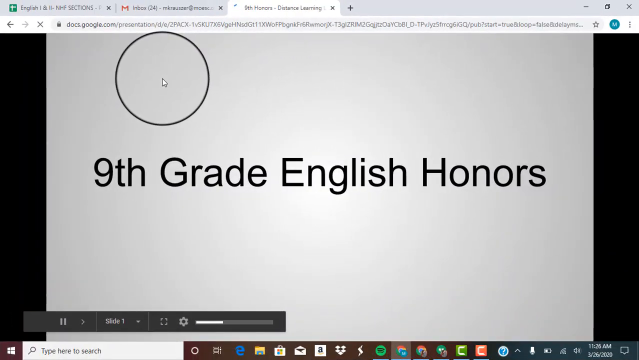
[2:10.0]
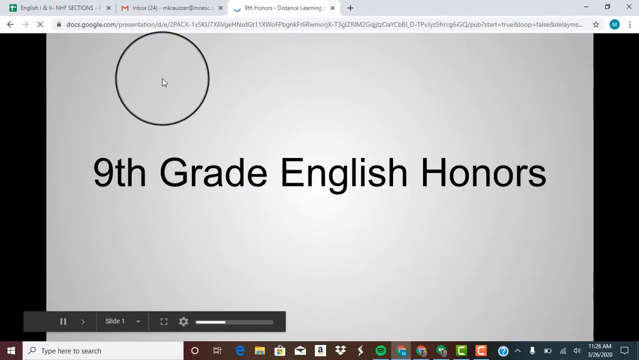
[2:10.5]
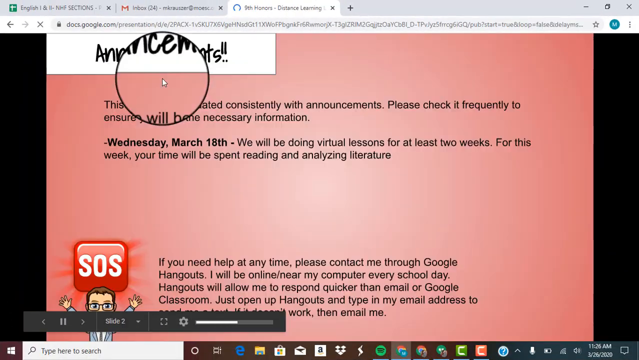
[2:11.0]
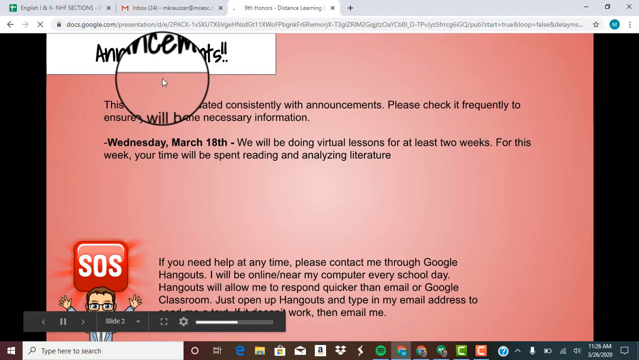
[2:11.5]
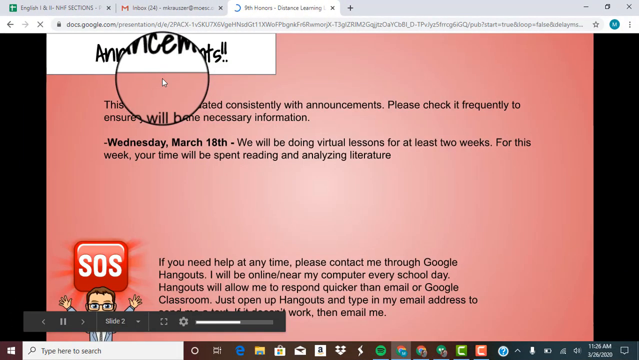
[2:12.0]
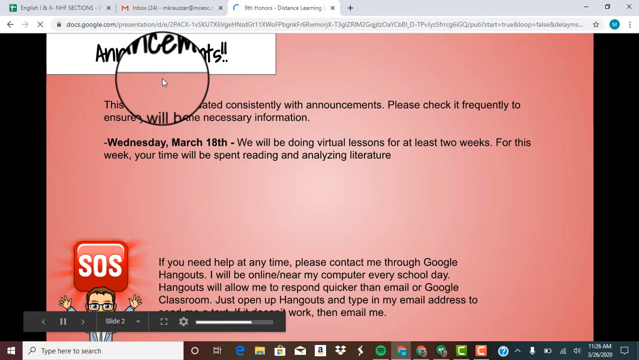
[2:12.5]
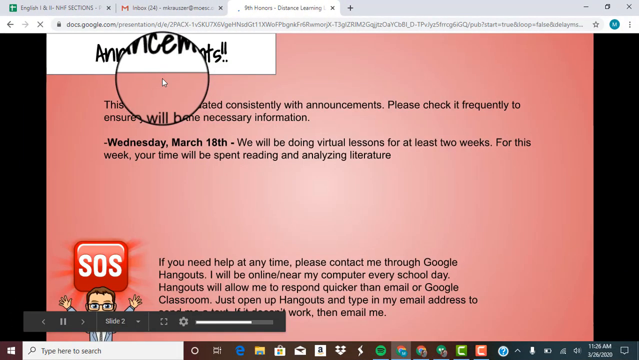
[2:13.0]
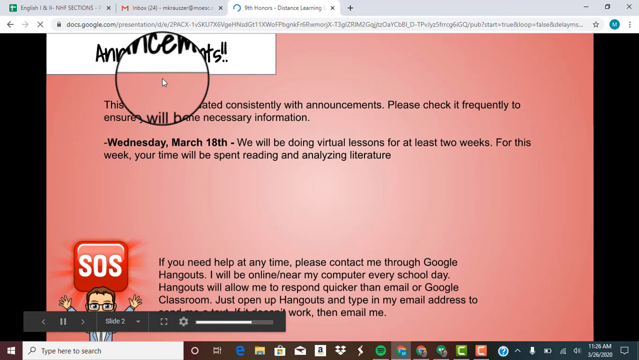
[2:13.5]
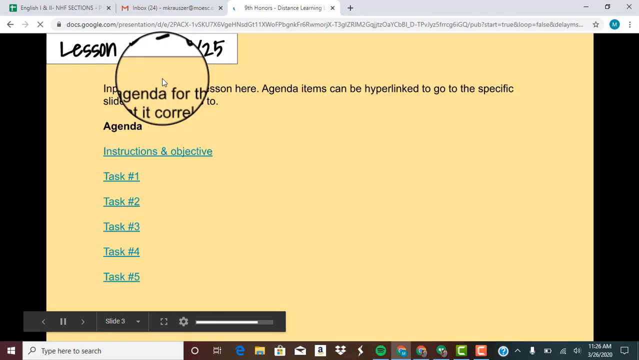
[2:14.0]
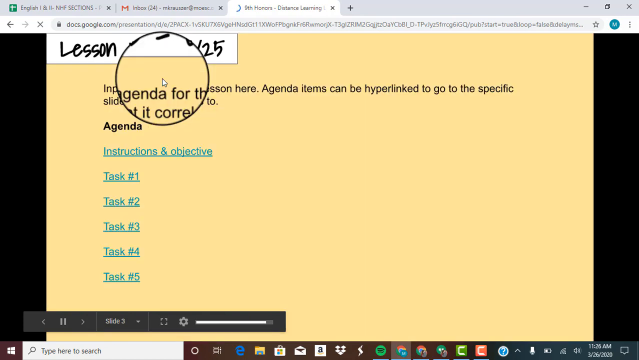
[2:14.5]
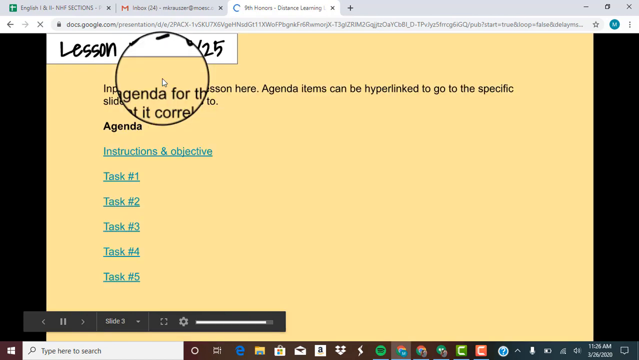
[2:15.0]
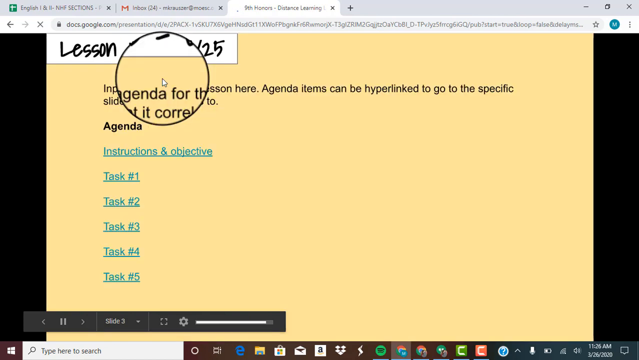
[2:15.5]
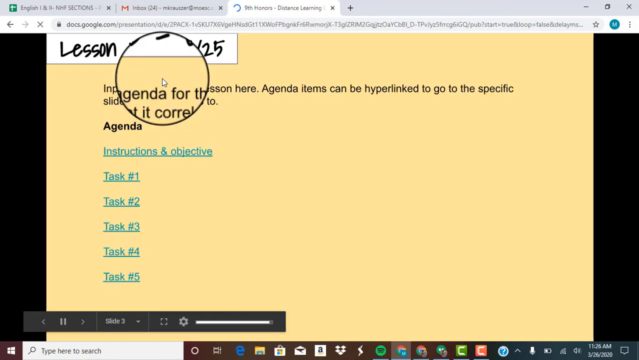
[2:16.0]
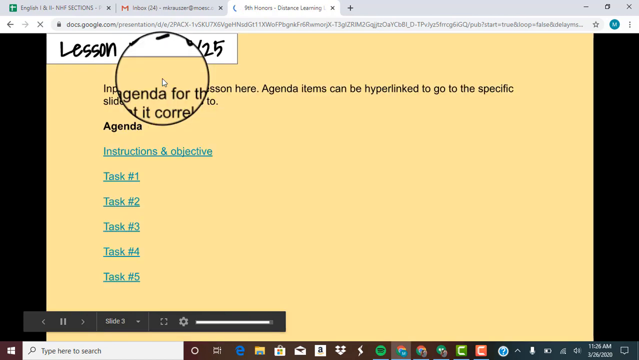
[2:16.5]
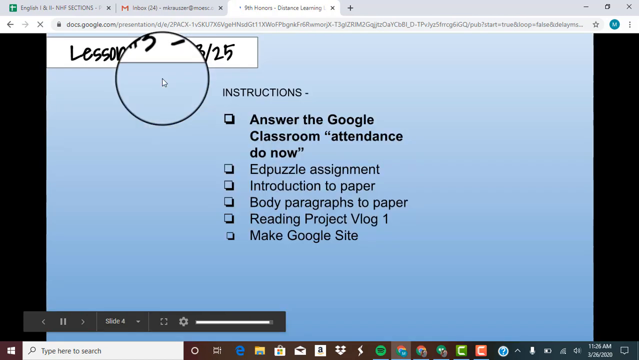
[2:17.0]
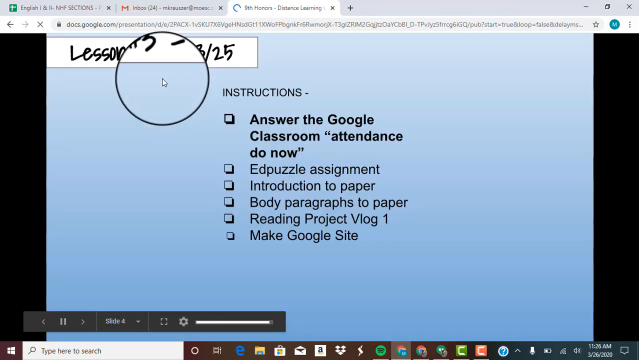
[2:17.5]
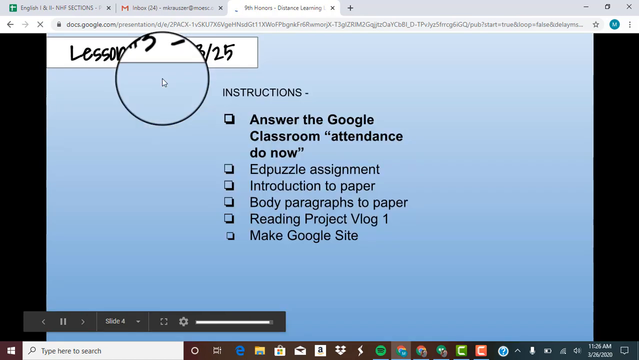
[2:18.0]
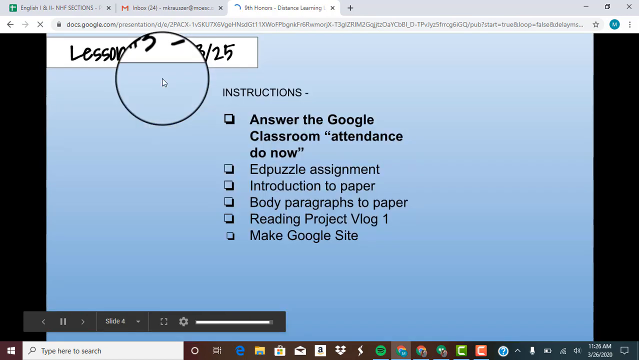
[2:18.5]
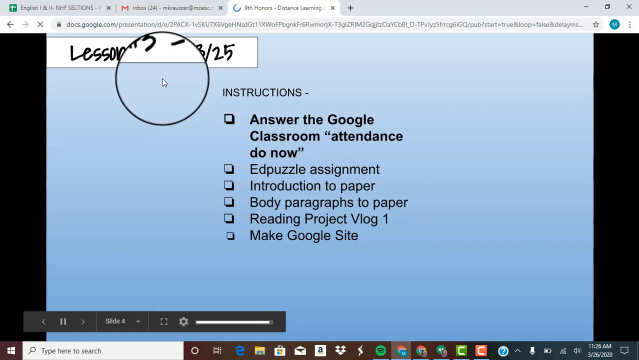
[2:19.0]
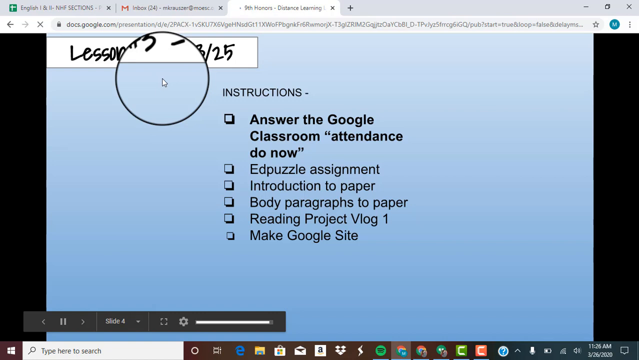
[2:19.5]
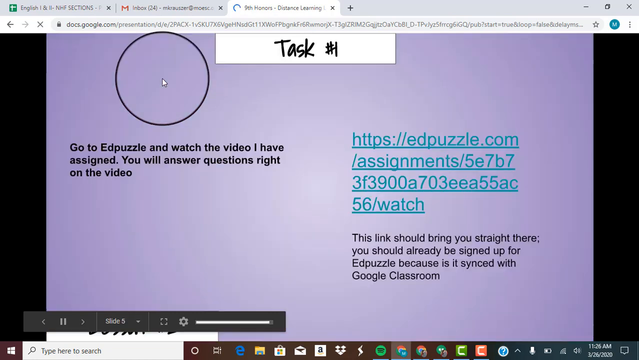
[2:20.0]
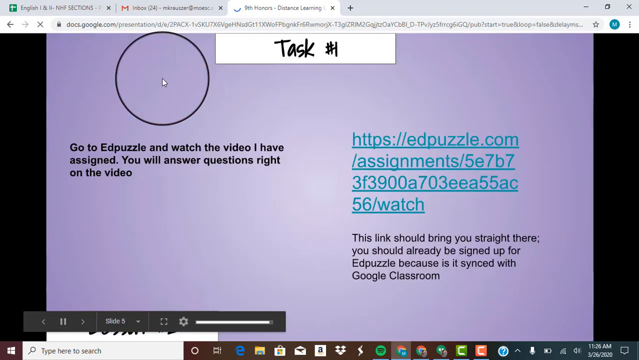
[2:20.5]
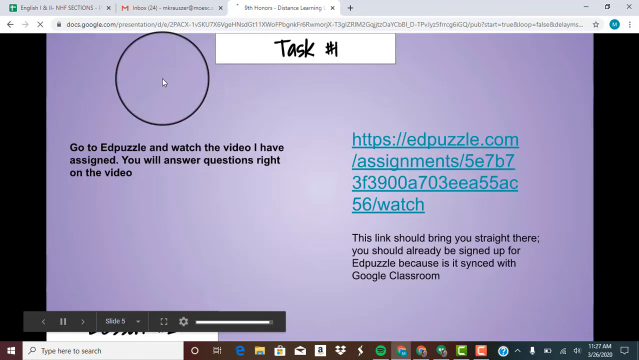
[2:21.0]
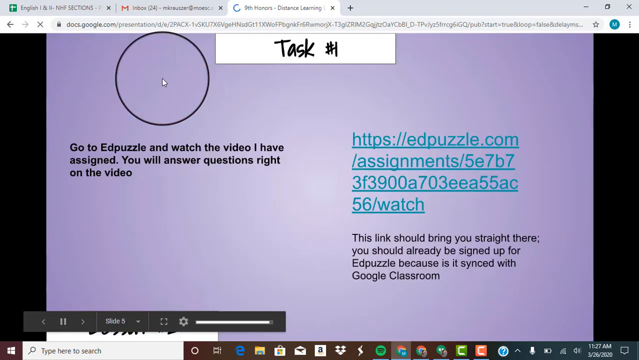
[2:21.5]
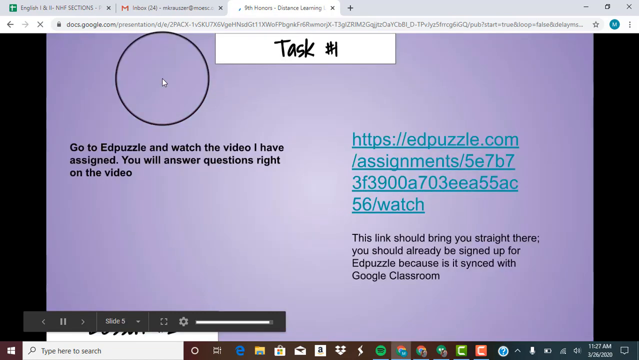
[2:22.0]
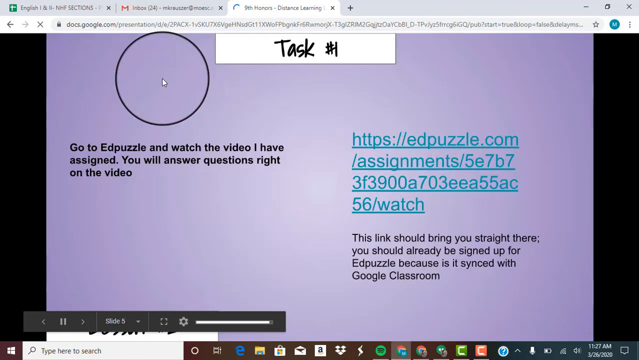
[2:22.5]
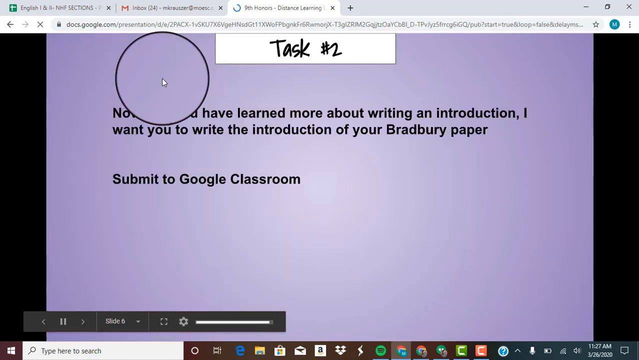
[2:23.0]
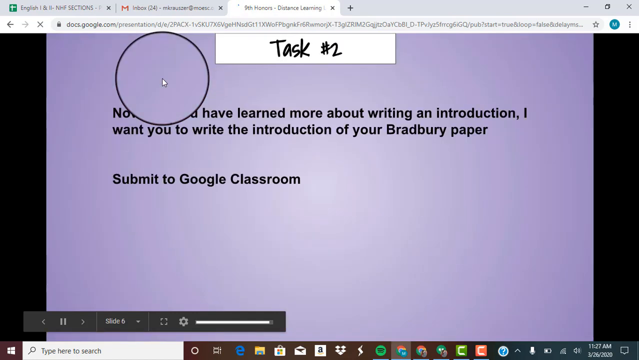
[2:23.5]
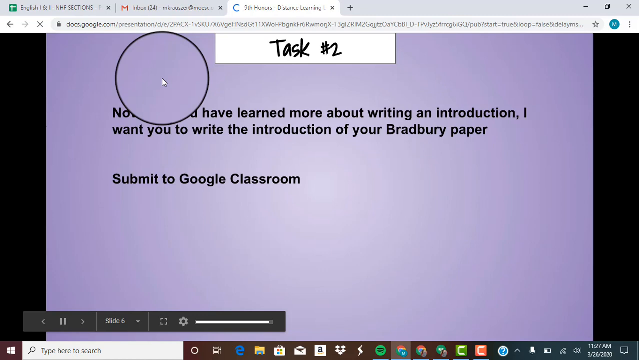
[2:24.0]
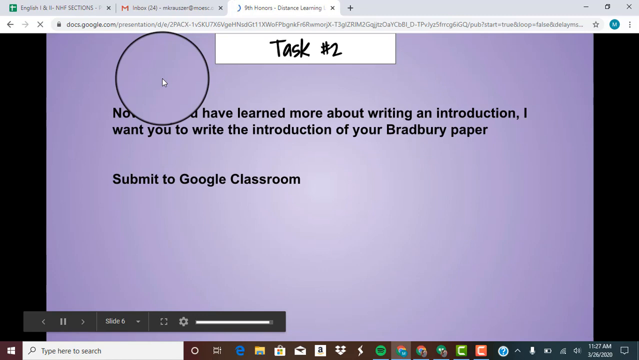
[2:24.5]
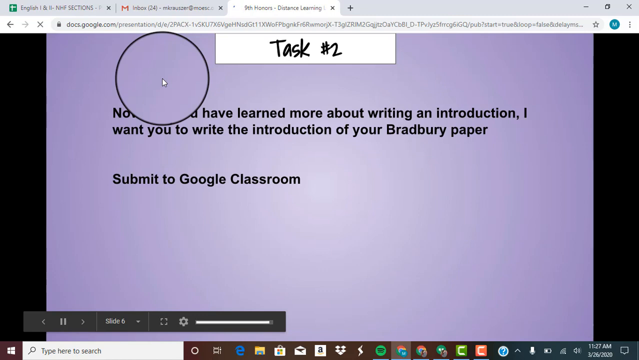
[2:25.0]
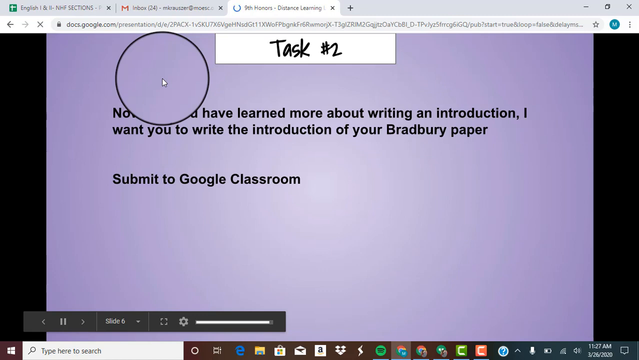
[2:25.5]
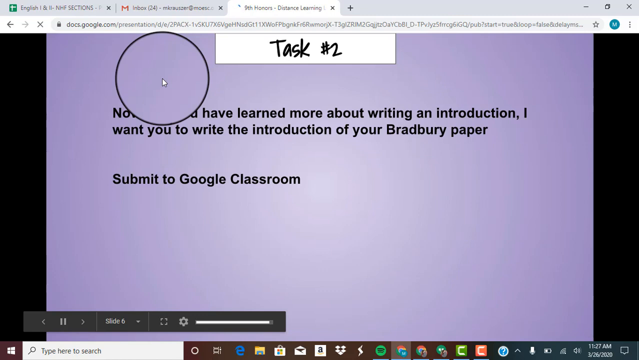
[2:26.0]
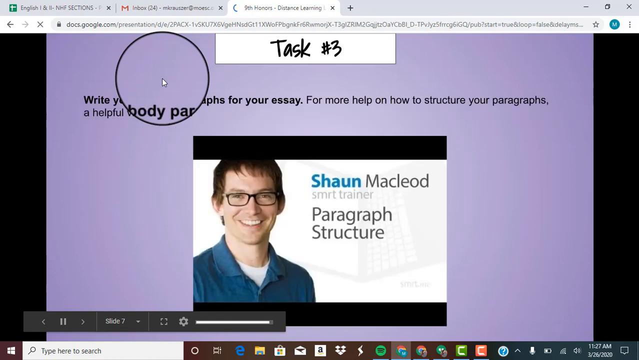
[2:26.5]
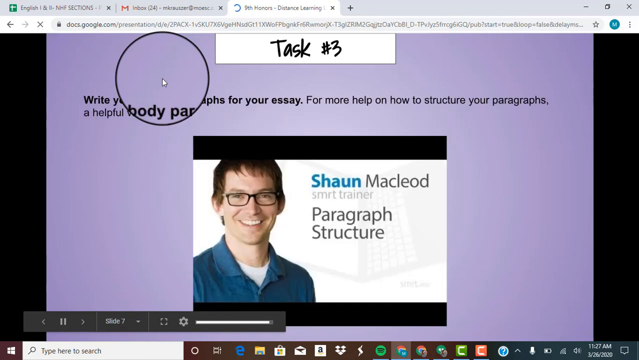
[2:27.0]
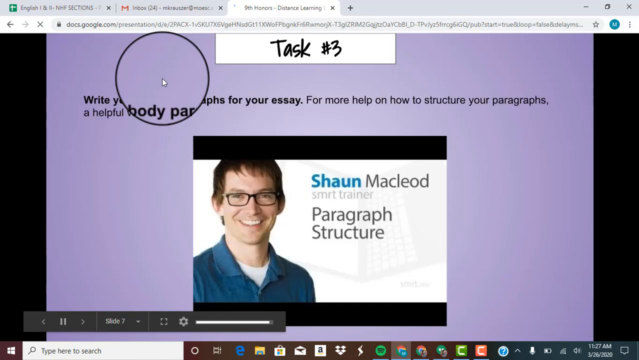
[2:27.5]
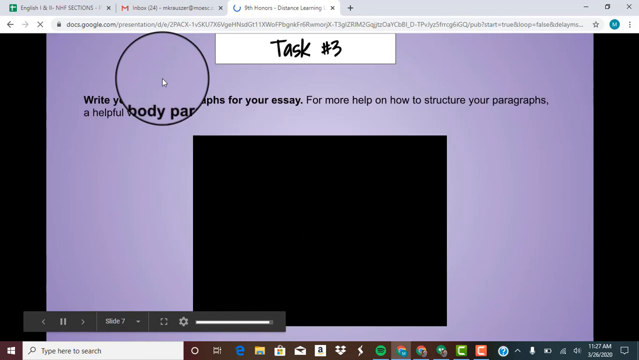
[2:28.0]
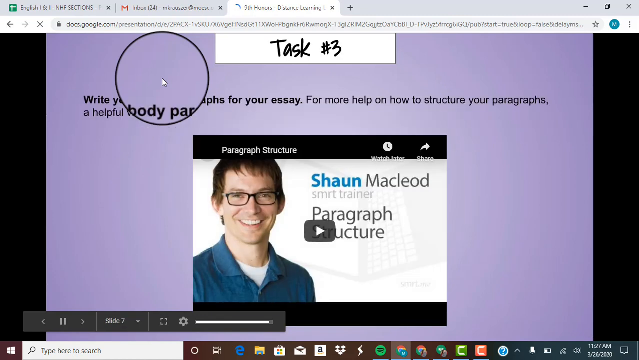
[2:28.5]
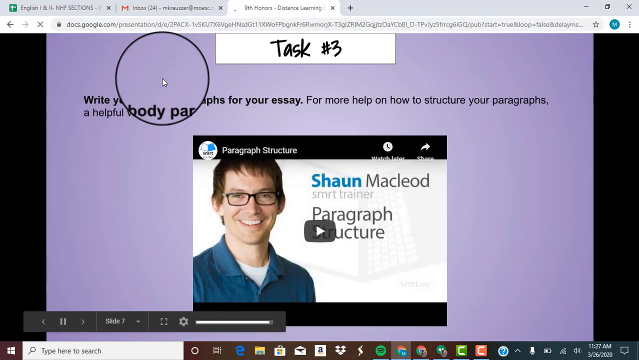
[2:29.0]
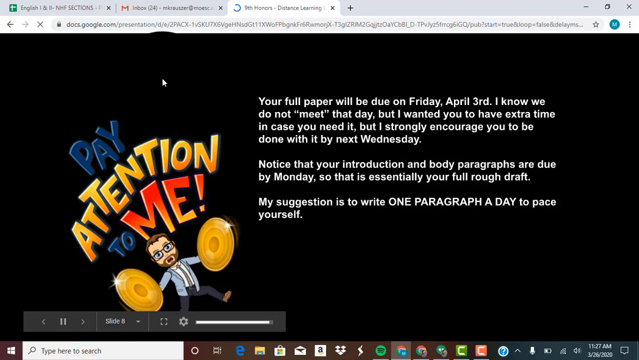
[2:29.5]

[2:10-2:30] The recording appears to show Google Chrome, with a tab bar holding what looks to be some kind of Google Sheet, Gmail, and the current page. The page has a gray background with black text across the screen reading "9th grade English honors," and the mouse is inside a clear circle outlined in black. The page changes: in the upper left-hand corner is a not-too-thick white rectangle with black text reading "announcements," hard to read because the mouse is in front of it; it seems to be announcements for a school. Part of the text reads "Wednesday March 18th We will be doing virtual lessons for at least two weeks for this week your time will be spent reading and analyzing literature." At the bottom is a cartoon man with a large SOS box above him, along with more content. Very quickly the page moves to a yellow page with another rectangle in the upper left reading "lesson" followed by something the mouse kind of covers, then to a blue page whose rectangle is also covered by the mouse; these seem to be instructions for a class. Next comes a purple background with a white rectangle in the middle reading "task number one" in black, then another purple page with "task number two," then "task number three." At the bottom of this one is either a video or a picture of a white man on a white background with short brown hair, black rectangular glasses and a blue shirt, with text reading "Sean MacLeod SMRT trainer paragraph structure." A play button then pops up in a gray rectangle, showing it is a video, and its name, "Paragraph structure," appears at the top. Then comes a black background with, on the left-hand side, a cartoon of a man who looks like Sean MacLeod holding two cylinders, with large text reading "pay attention to me," and white text about the class and when a particular paper is due. The mouse stays in the same place the whole time.